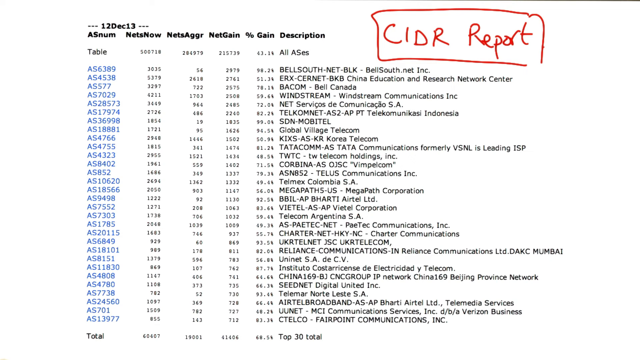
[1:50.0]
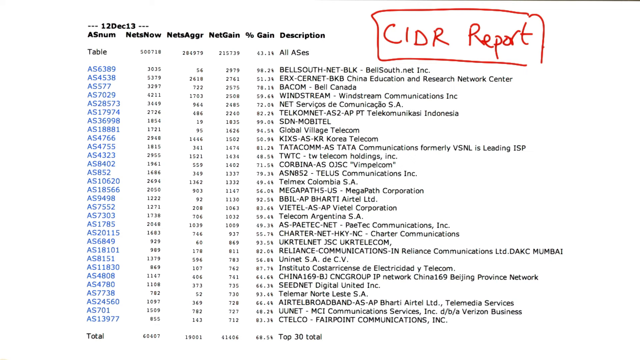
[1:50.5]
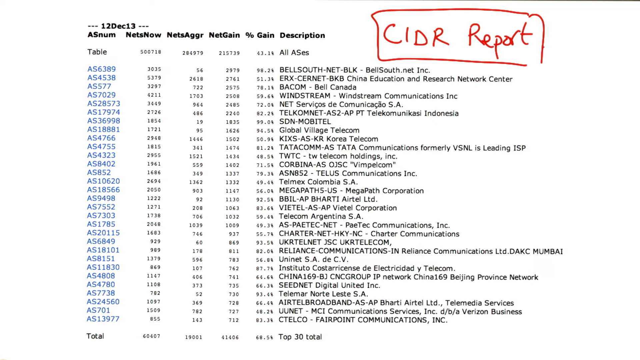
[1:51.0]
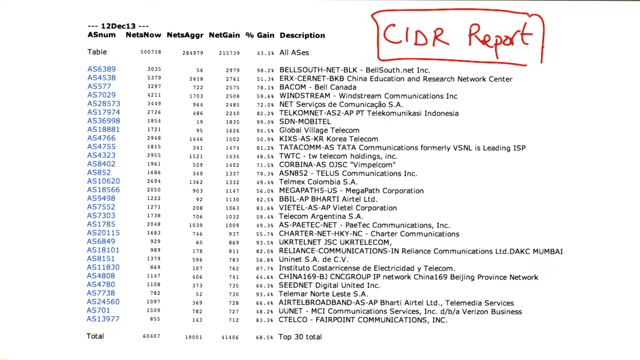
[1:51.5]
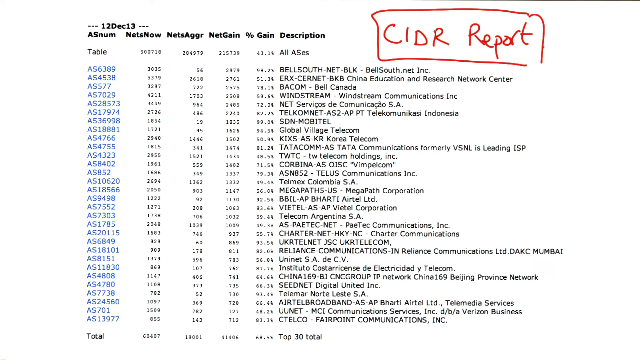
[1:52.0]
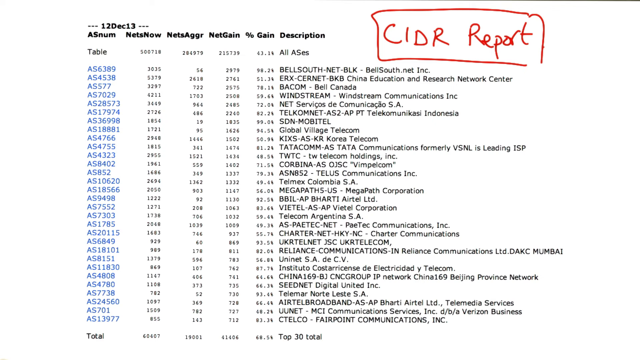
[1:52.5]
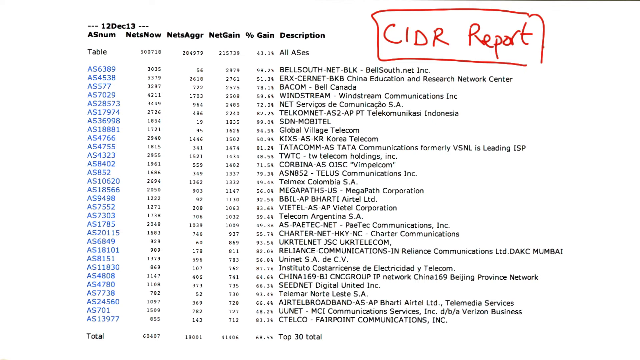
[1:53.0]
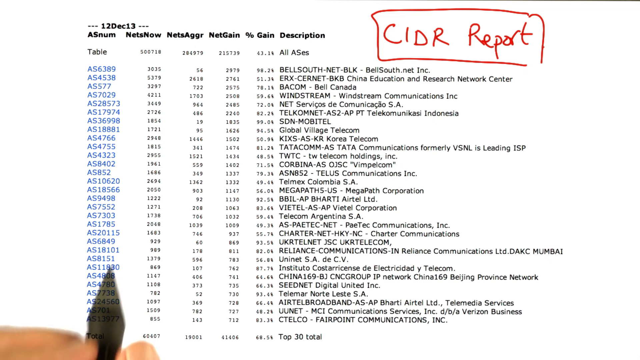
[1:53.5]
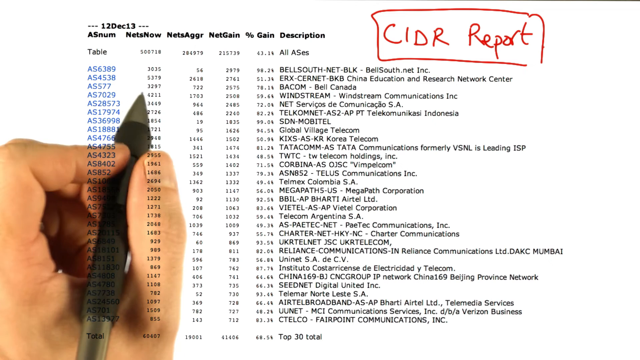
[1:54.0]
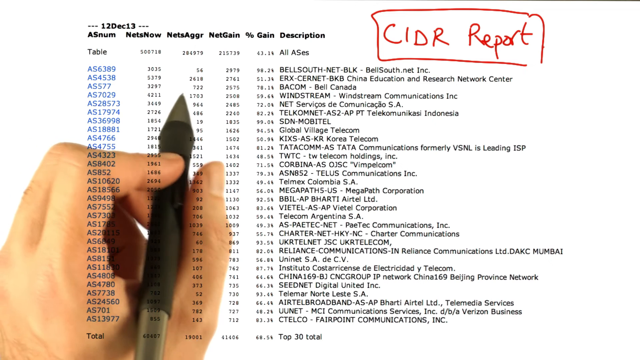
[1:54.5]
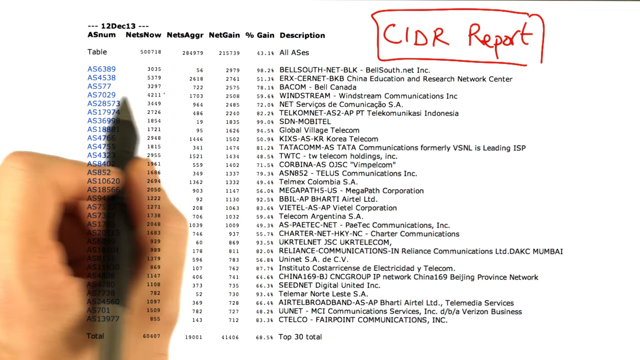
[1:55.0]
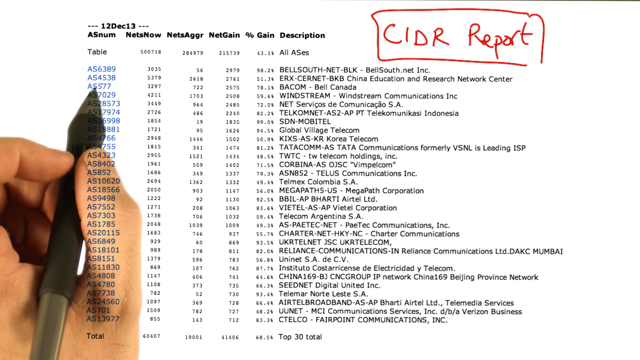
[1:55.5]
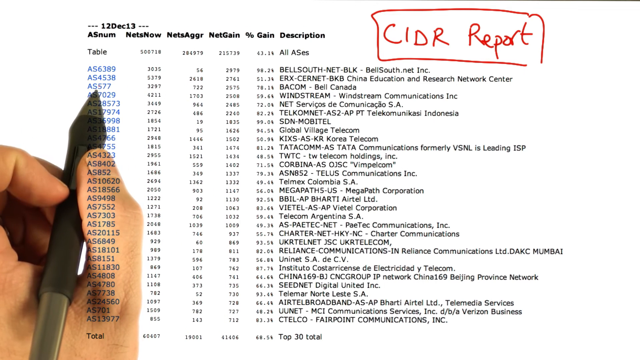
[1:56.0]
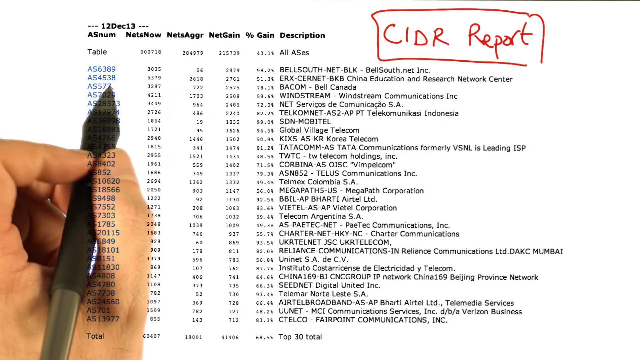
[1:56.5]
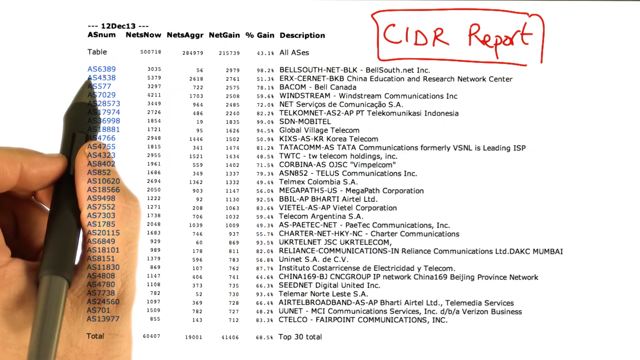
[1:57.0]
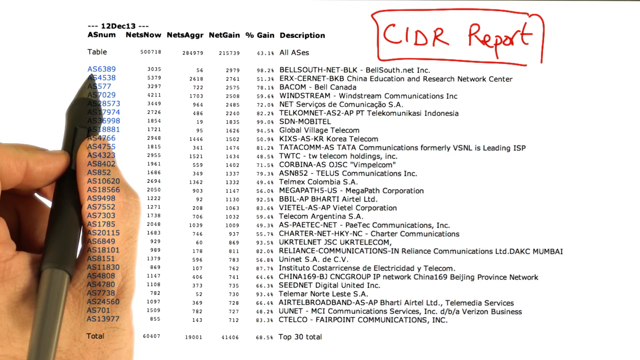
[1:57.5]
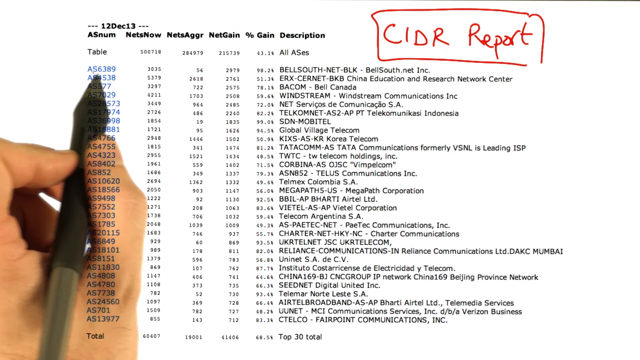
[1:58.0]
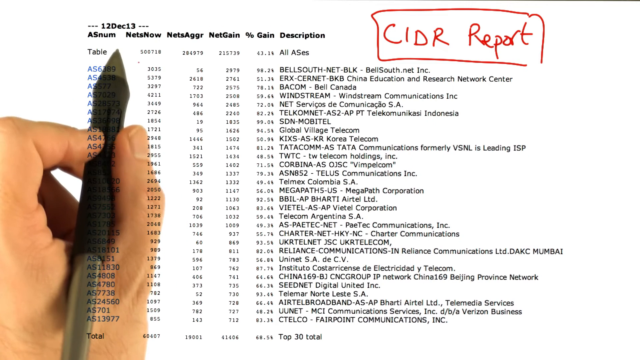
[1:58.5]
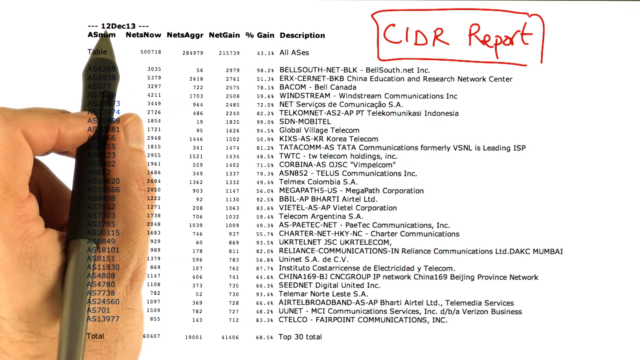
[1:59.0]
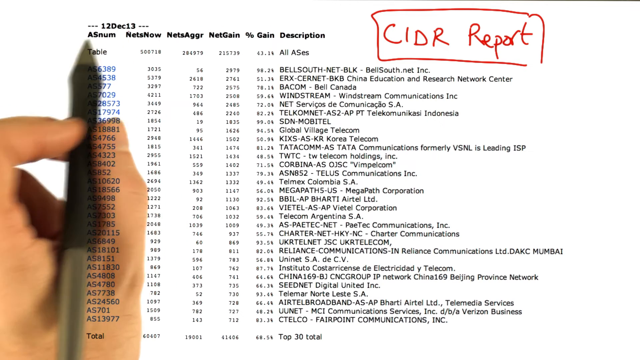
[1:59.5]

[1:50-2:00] The white background with the columns is shown. The pen comes in, moves up to the third entry down on the table, then moves up to the top, points down and goes down. The entries under the table column are all AS followed by numbers, shown in blue, while all the other information is black. The three columns to the right of that are all numbers, the others are decimal values, and company names are on the right side. As the pen comes up, the side of the thumb, part of the thumbnail, a little of the back of the hand and the knuckles, and the pointer finger are visible, with a little of the middle and ring fingers tucked under the pen. The pen moves over to the table column again, up to the top entry, and scans across the page, apparently looking around.